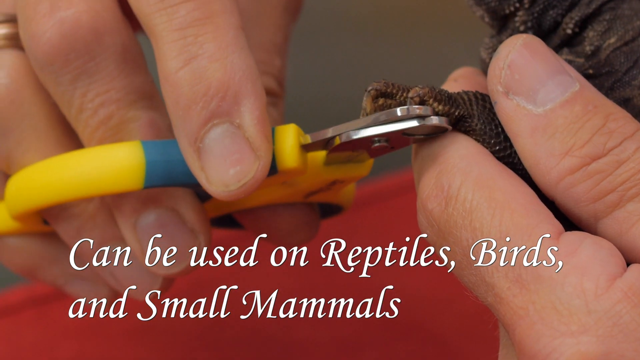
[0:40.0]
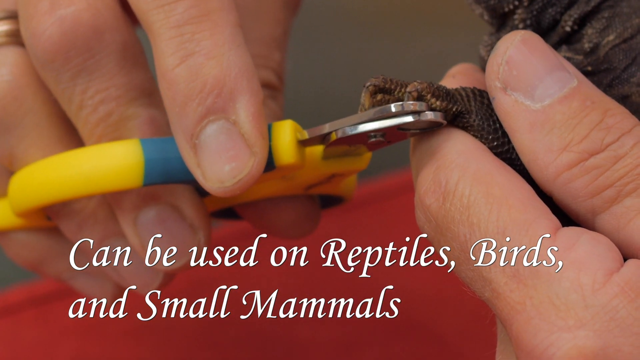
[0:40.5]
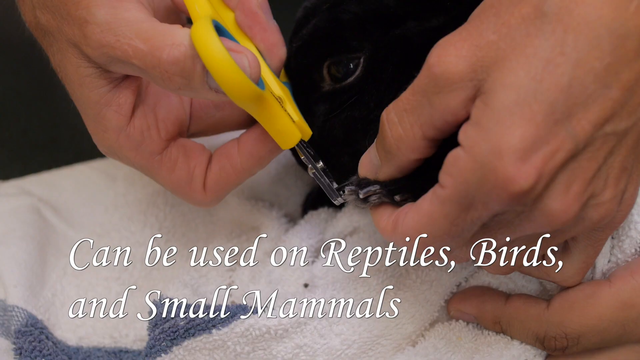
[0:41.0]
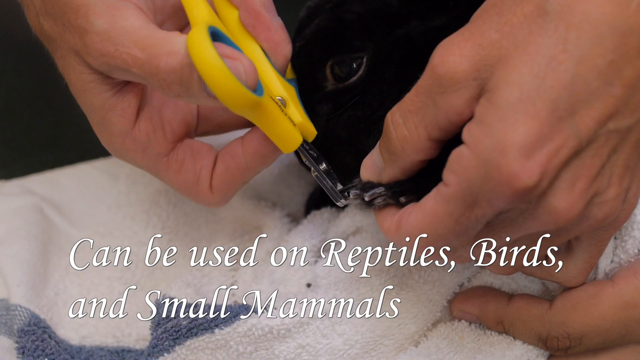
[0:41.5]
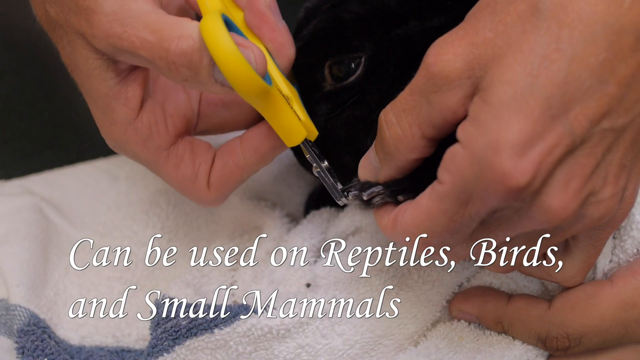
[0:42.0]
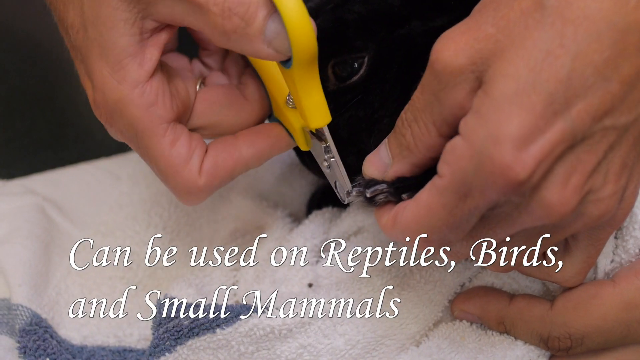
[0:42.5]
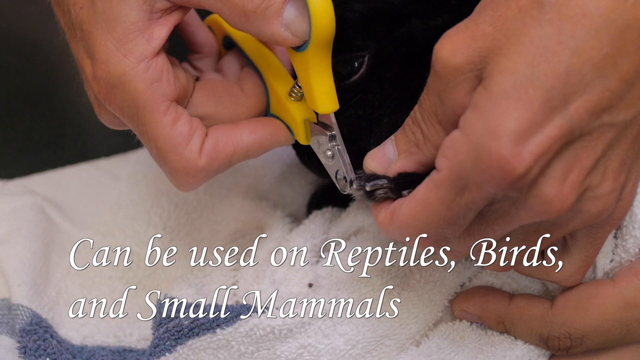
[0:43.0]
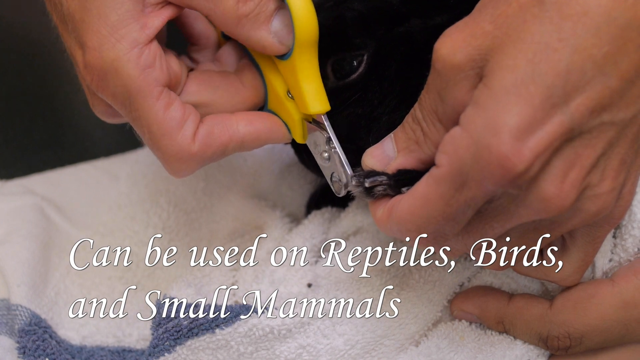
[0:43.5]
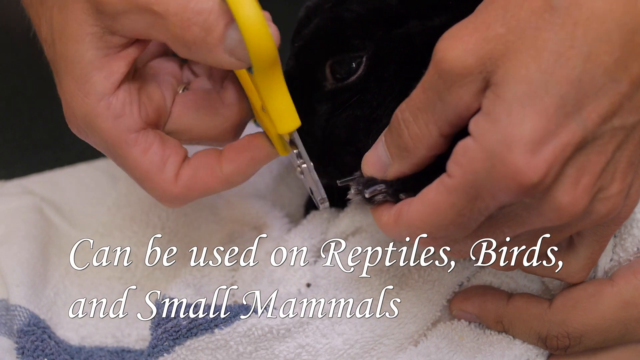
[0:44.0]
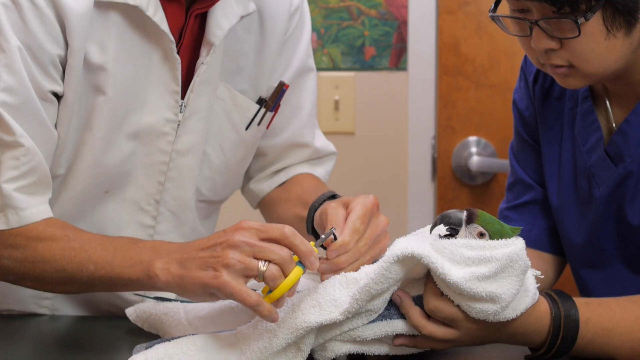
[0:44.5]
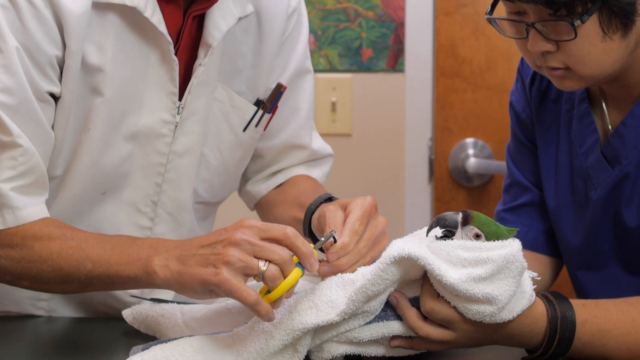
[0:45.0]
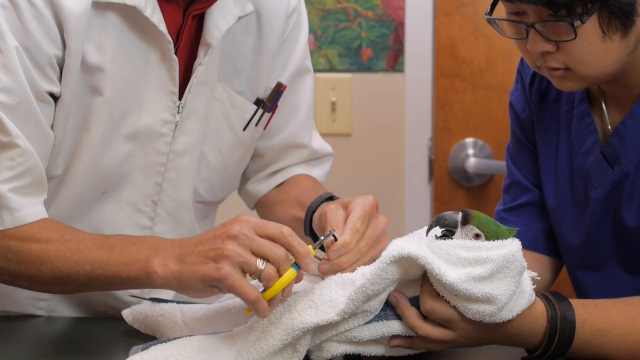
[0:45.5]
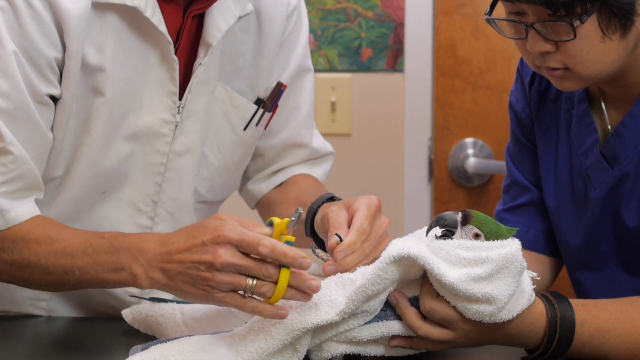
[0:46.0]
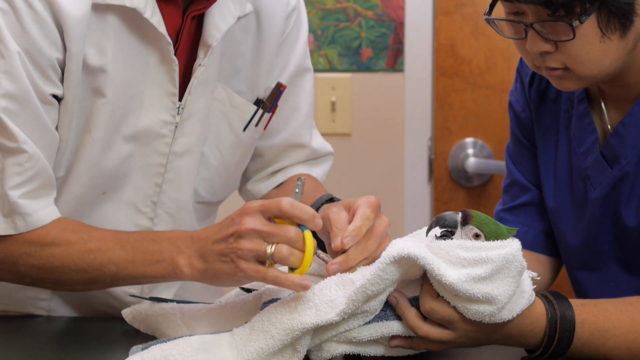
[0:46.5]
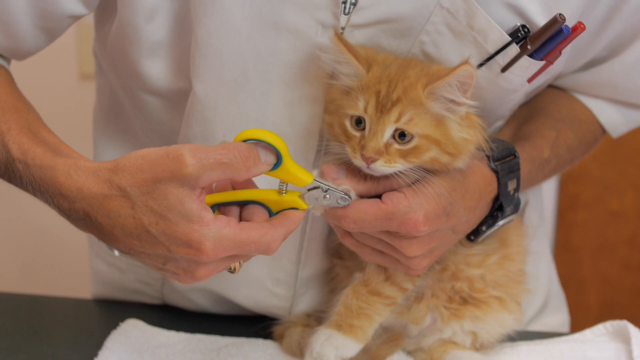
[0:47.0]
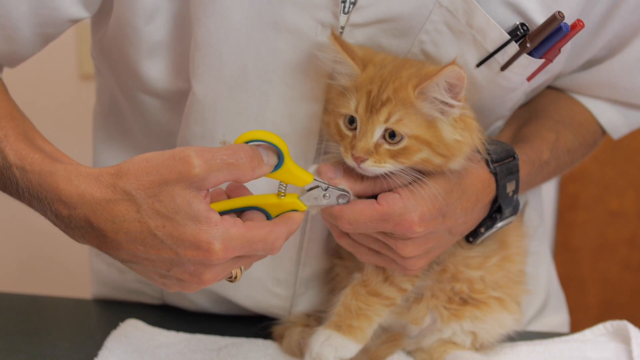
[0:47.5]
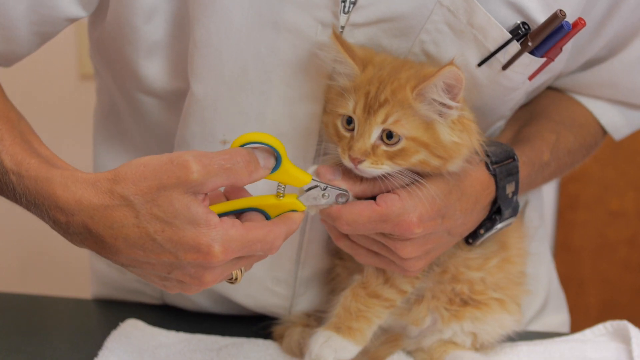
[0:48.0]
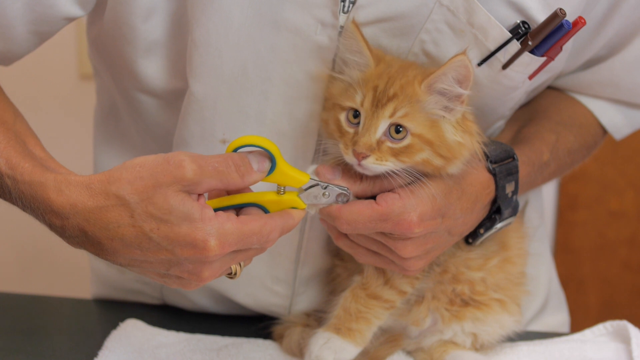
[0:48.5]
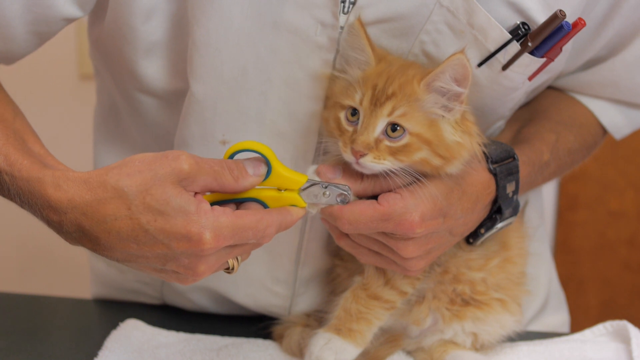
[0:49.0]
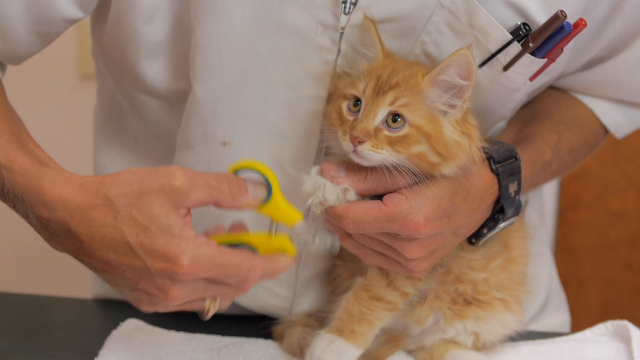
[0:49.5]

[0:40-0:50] A hand holding a blue and yellow clipper cuts the nail of a small animal; the hand looks like a man's. The clipper has an ash-colored metal edge. An inscription states that it can be used on reptiles, birds and mammals. The small animal is placed on a white towel while its nails are cut, and another hand holds it. Another shot shows the doctor cutting an animal's nails and a woman in a blue shirt and black eyeglasses, who looks closely at the cutting while holding the animal carefully.